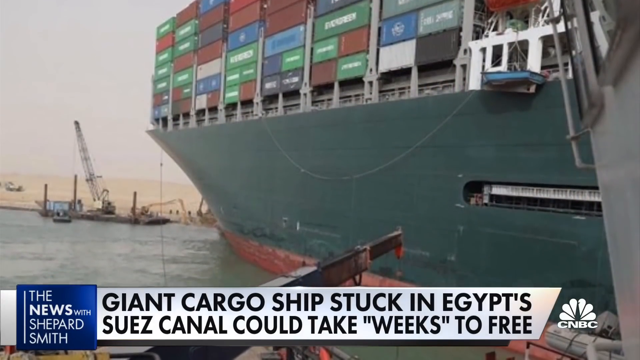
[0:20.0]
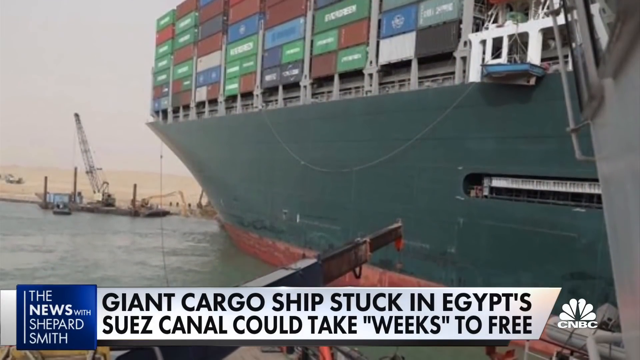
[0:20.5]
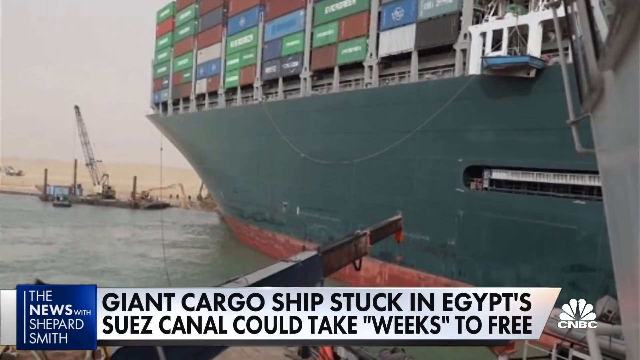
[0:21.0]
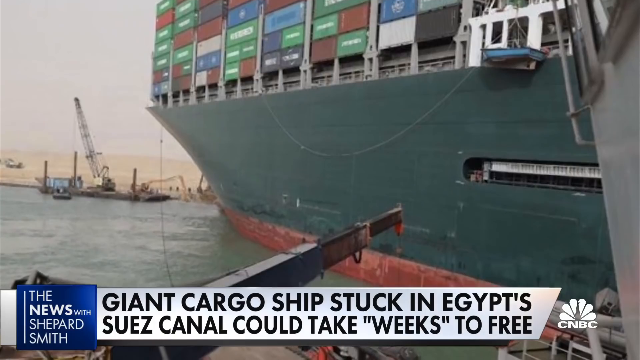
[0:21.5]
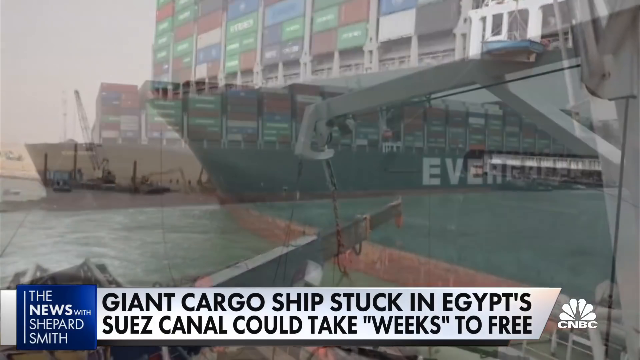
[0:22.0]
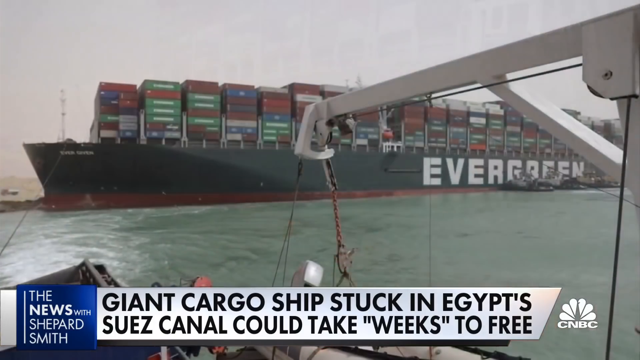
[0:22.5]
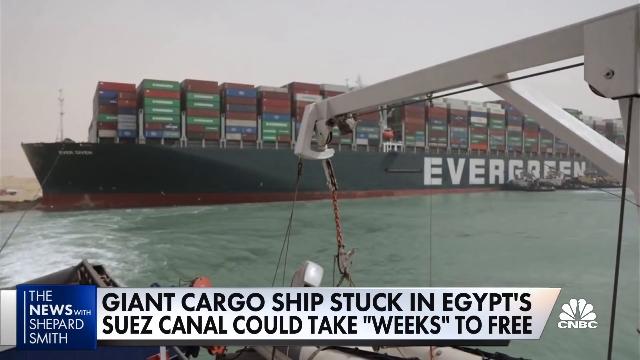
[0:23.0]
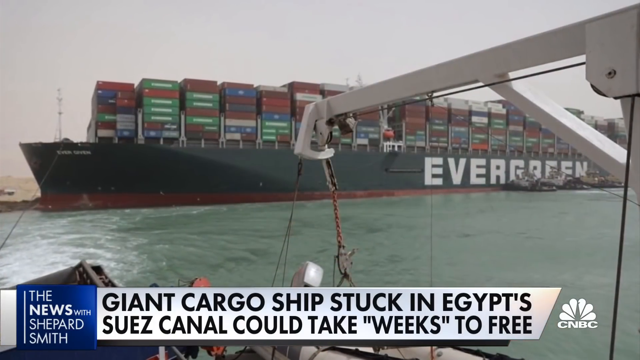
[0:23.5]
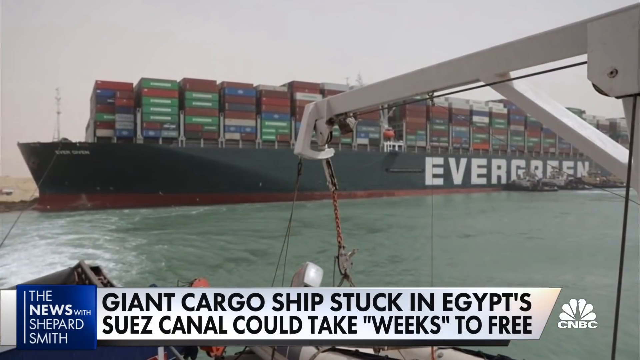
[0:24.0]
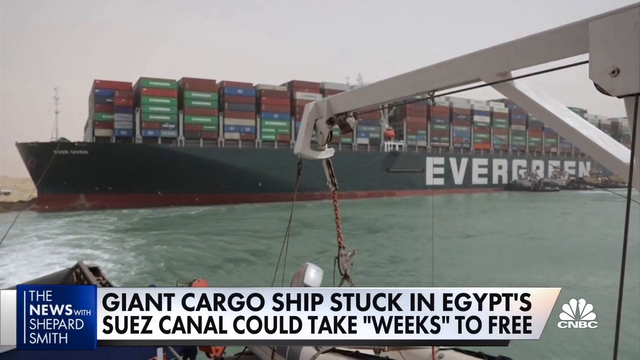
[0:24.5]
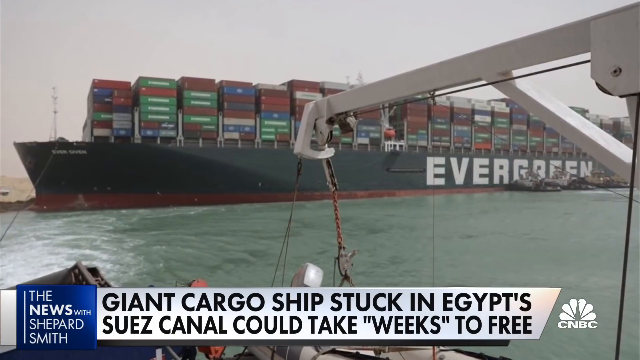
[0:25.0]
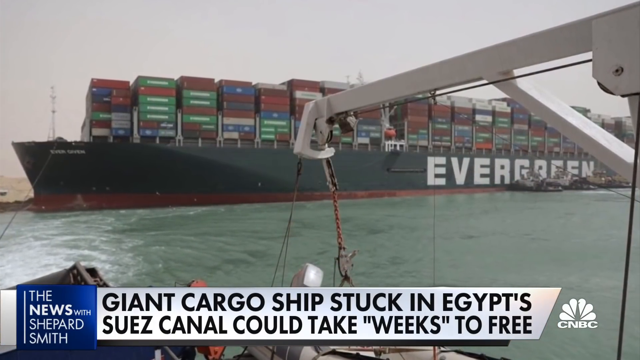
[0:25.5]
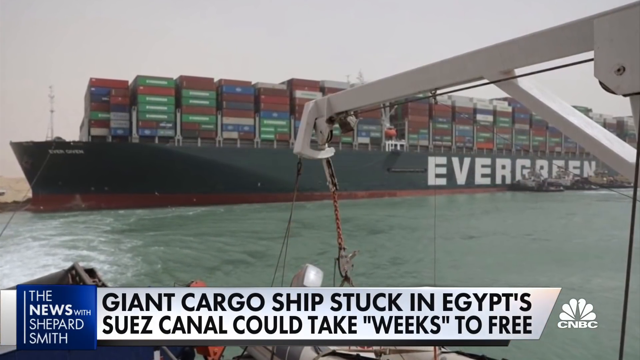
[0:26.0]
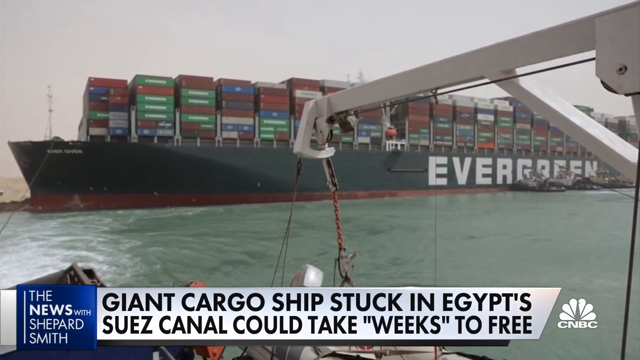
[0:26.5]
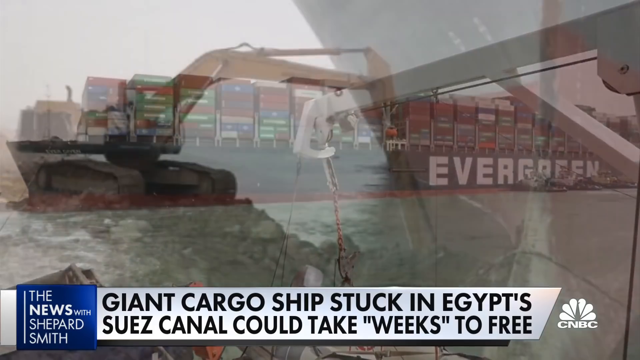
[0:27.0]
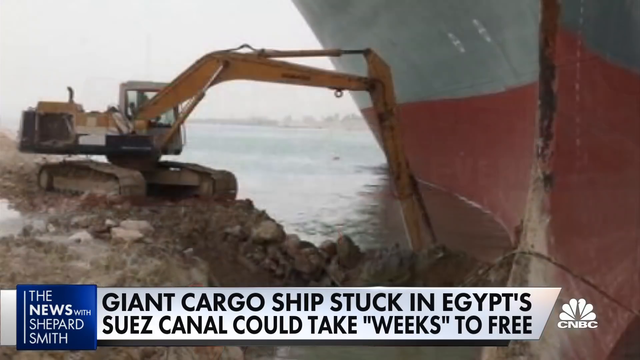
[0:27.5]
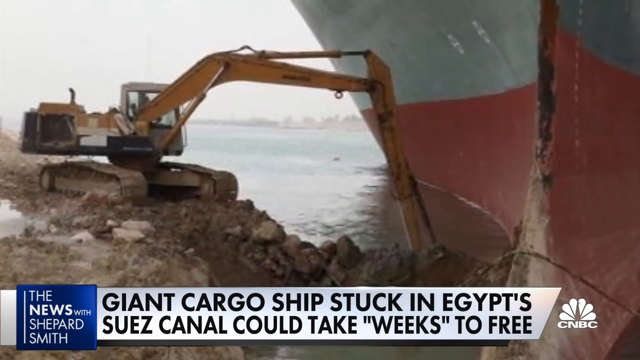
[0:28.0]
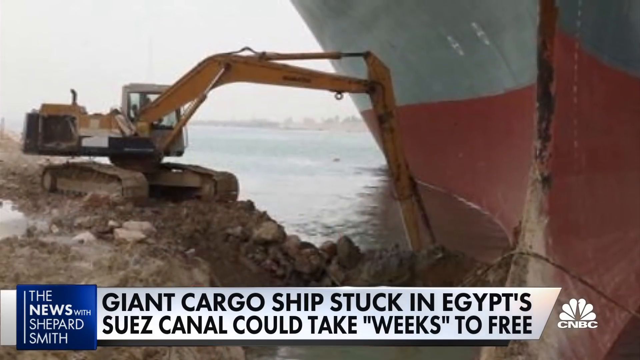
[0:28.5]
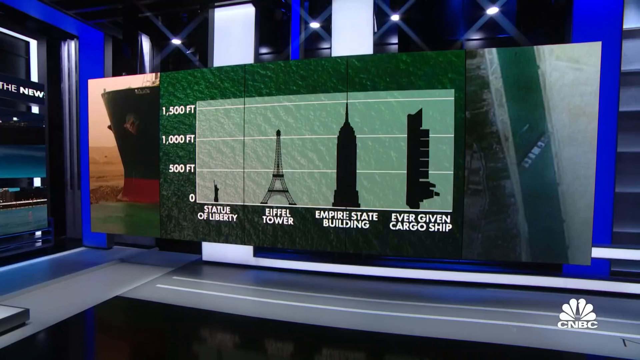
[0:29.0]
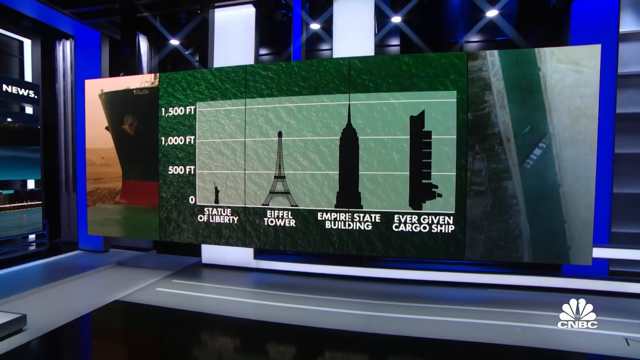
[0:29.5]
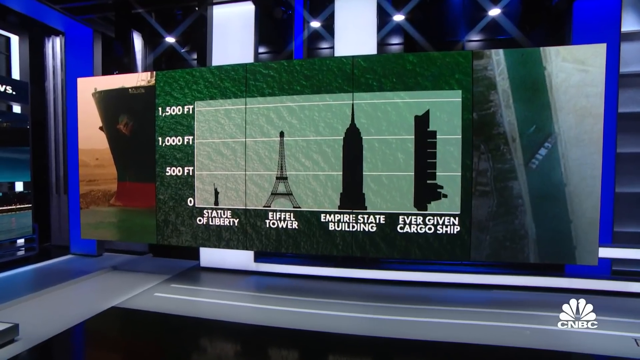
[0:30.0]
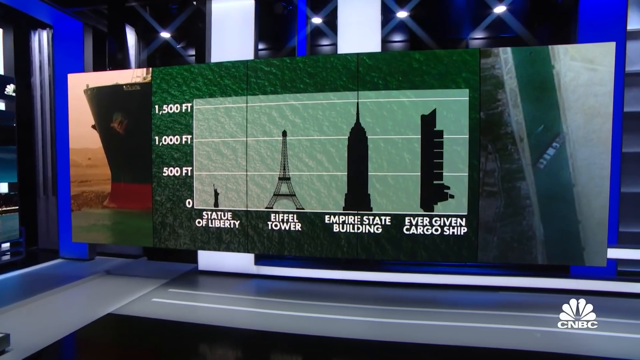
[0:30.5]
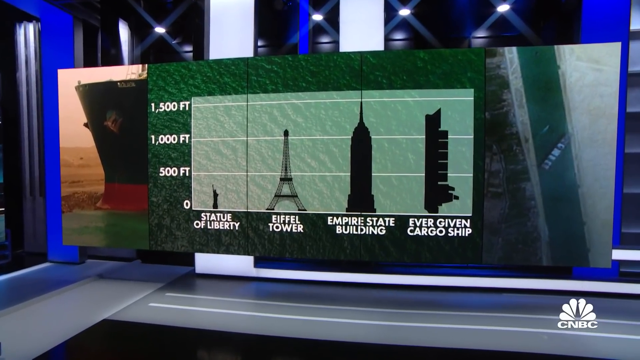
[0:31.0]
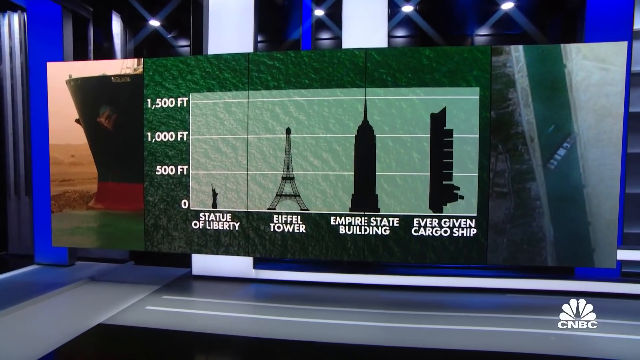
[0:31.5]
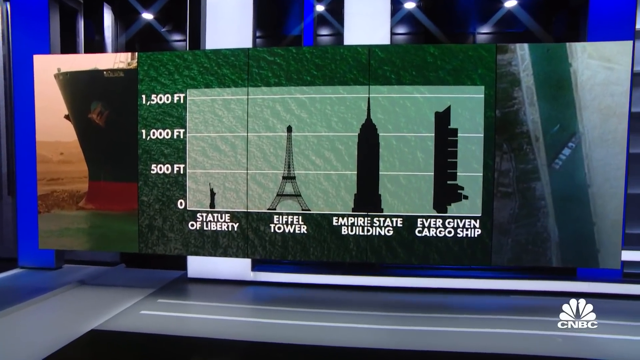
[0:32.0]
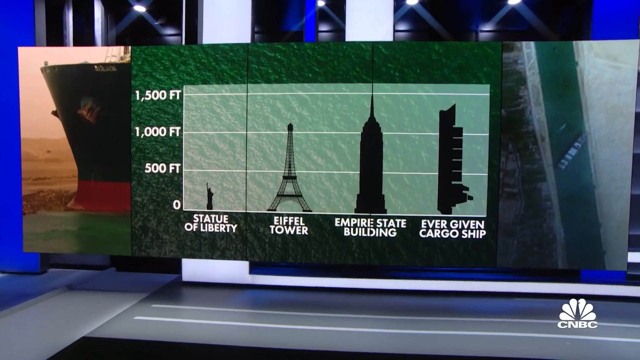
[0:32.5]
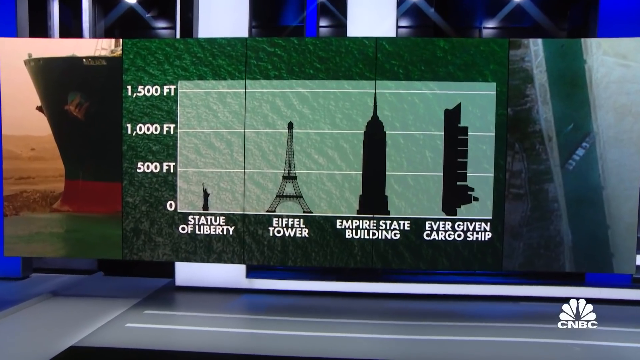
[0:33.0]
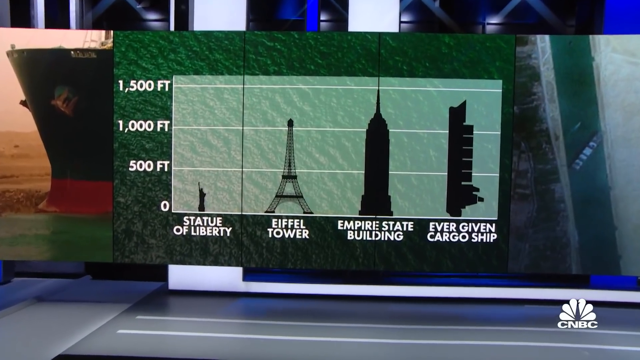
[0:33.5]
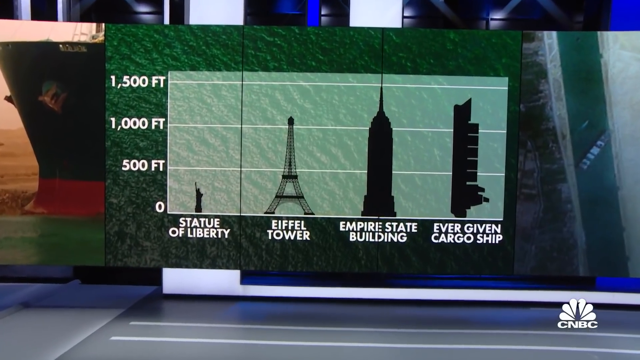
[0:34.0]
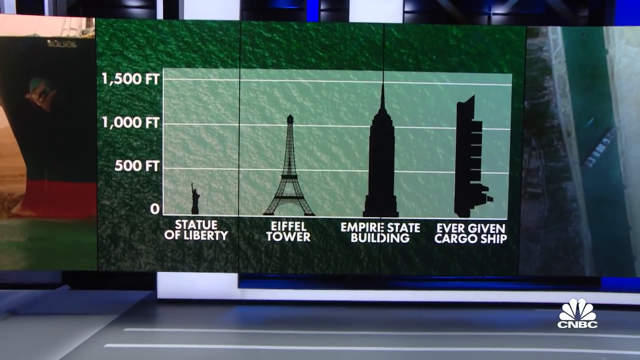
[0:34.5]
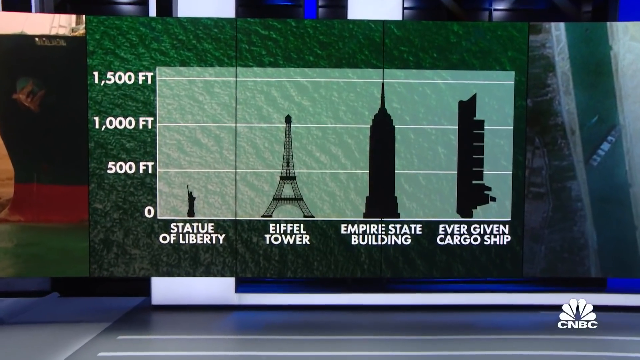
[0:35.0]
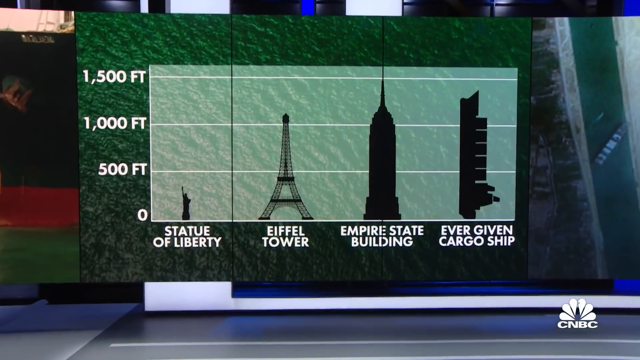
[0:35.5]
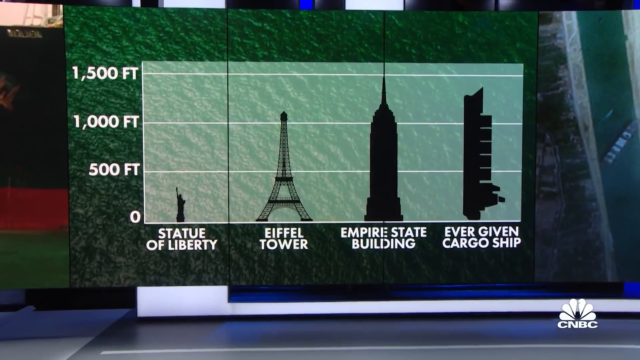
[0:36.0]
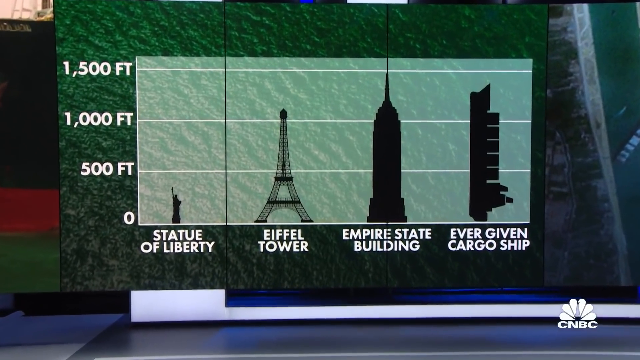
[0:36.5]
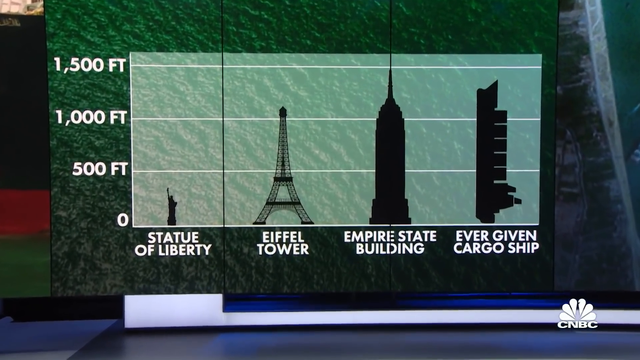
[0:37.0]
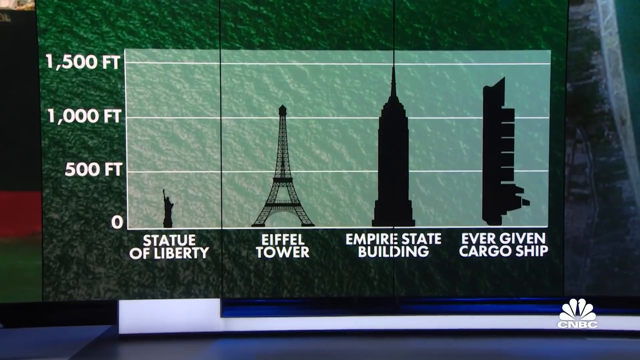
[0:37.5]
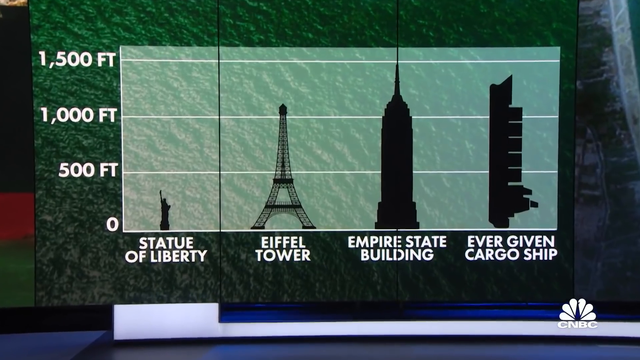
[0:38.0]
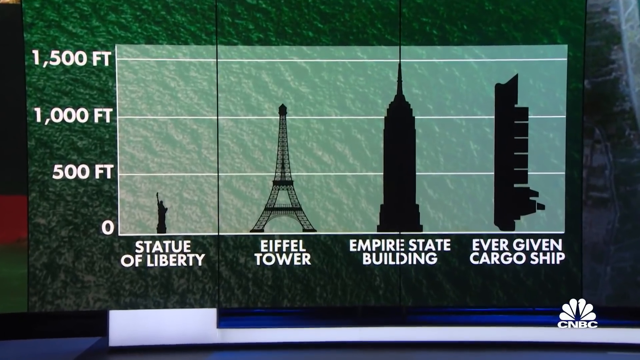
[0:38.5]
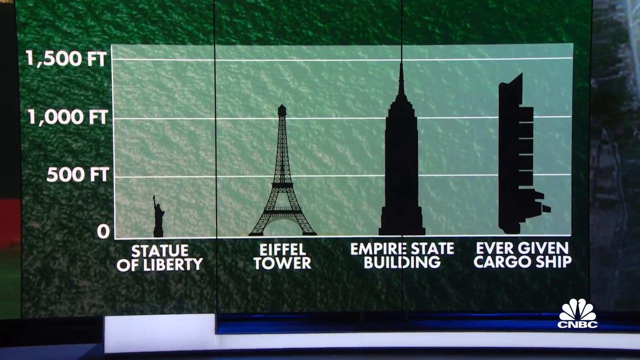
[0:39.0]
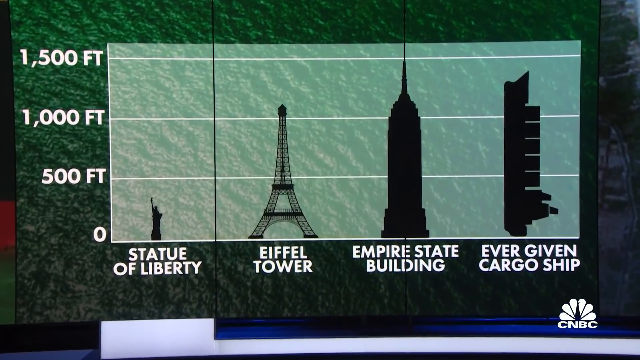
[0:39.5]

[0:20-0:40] A wide-angle view shows the Evergreen-colored ship on the Suez Canal, with red, green, blue and white shipping containers stacked on top. On the right side, tugboats are pushed up against the ship trying to free it, and in the right foreground is what looks like a white crane mechanism, maybe dropping things into the water. The CNBC logo remains in the bottom right. At the bottom left, white text on a blue background reads "the news with Shepard", and black text on a white background reads "giant cargo ship stuck in Egypt Suez Canal could take weeks". The video then cuts back to the studio, where a giant video display shows the Statue of Liberty, the Eiffel Tower, the Empire State Building and the Evergreen cargo ship stood up on its side to show its size, almost 1,500 feet in length. The display moves back and forth, then holds on the picture comparing the heights of the four objects for a moment.